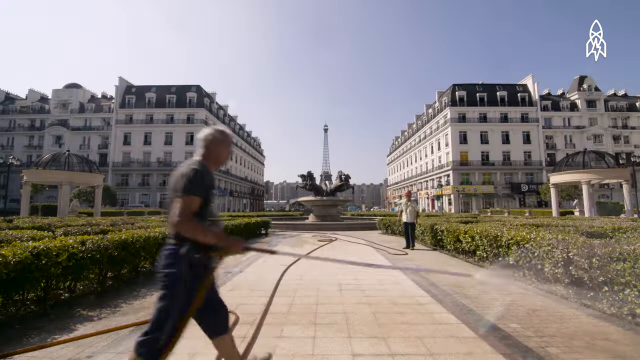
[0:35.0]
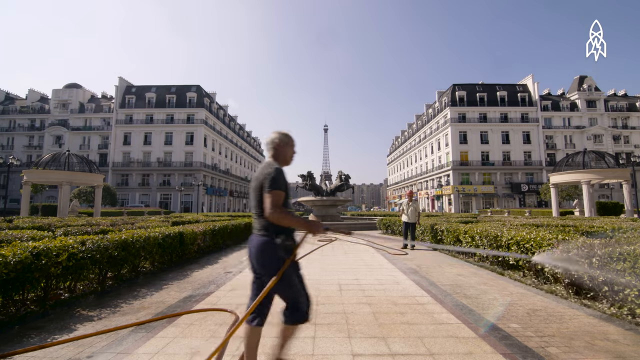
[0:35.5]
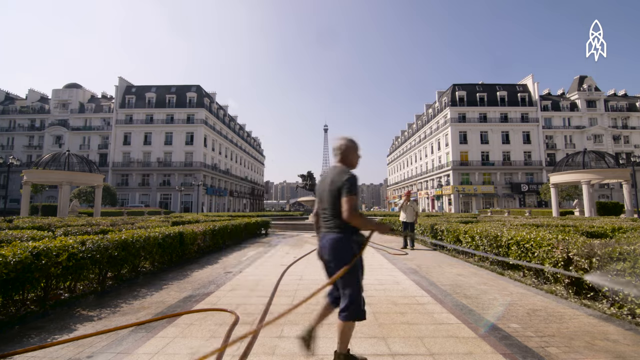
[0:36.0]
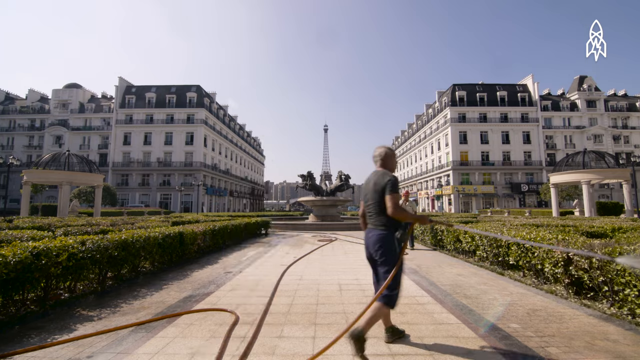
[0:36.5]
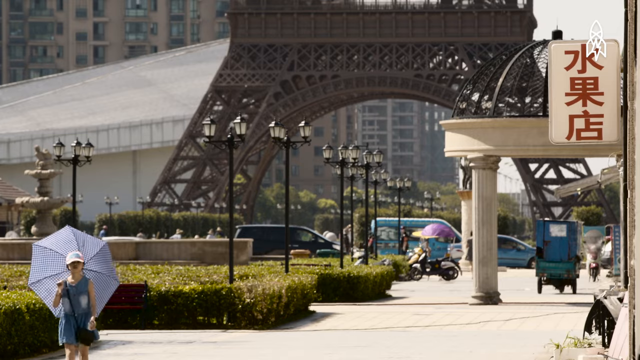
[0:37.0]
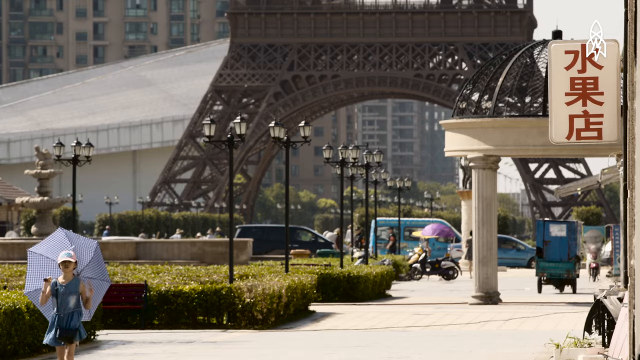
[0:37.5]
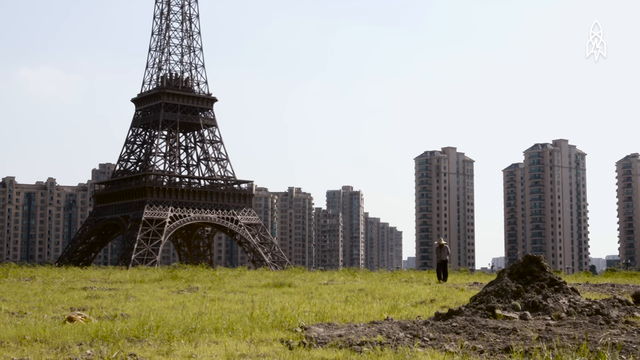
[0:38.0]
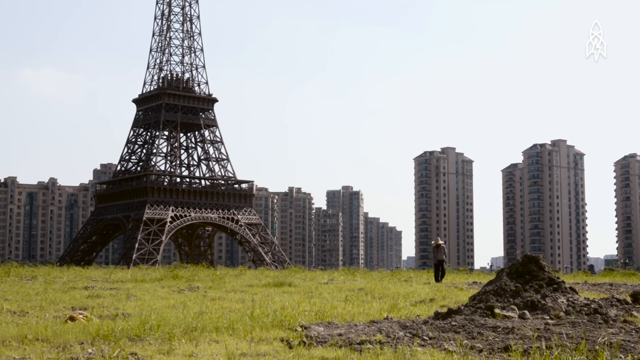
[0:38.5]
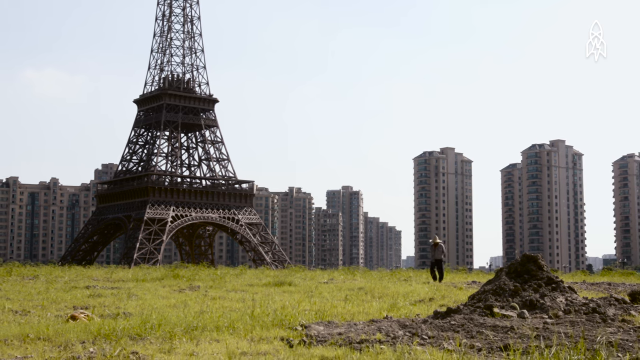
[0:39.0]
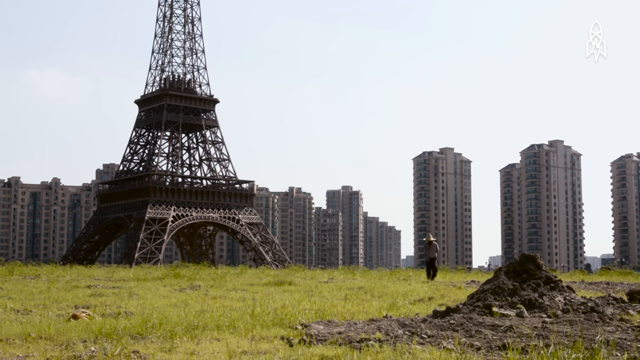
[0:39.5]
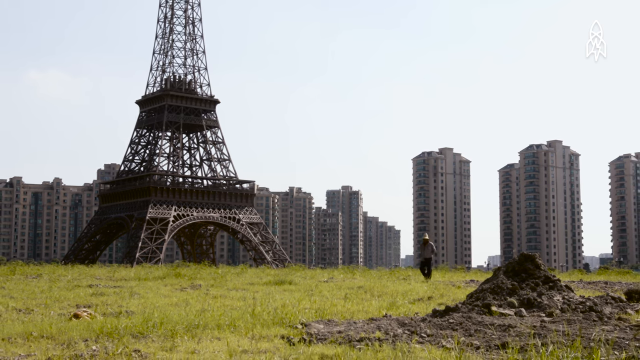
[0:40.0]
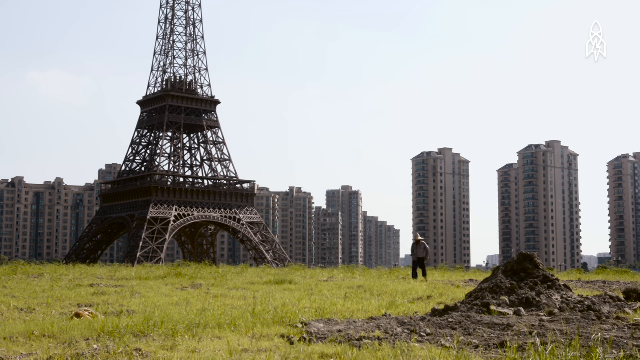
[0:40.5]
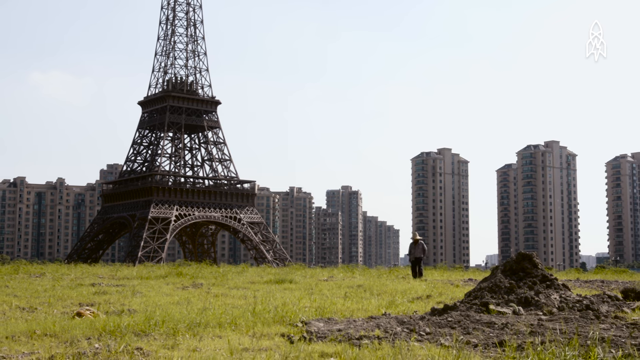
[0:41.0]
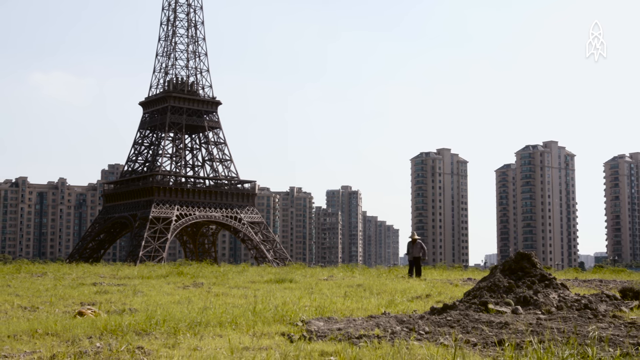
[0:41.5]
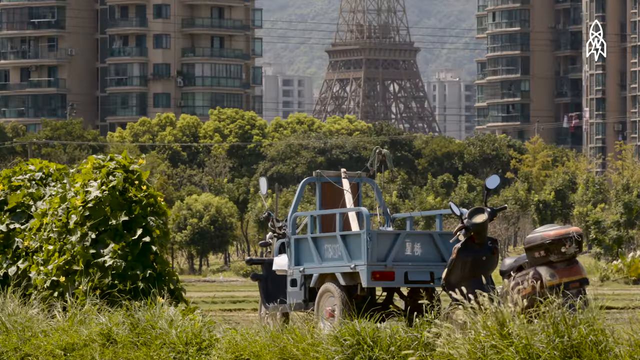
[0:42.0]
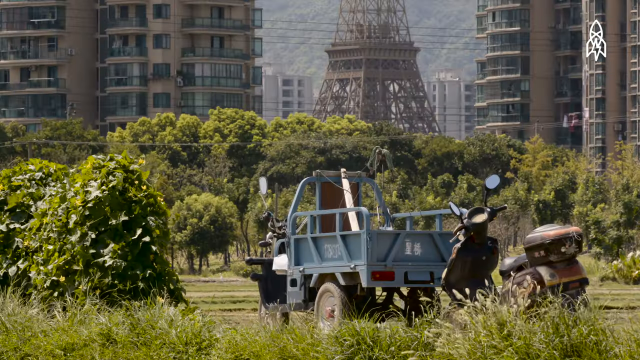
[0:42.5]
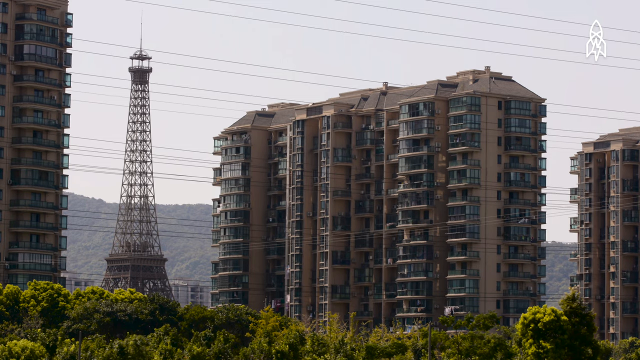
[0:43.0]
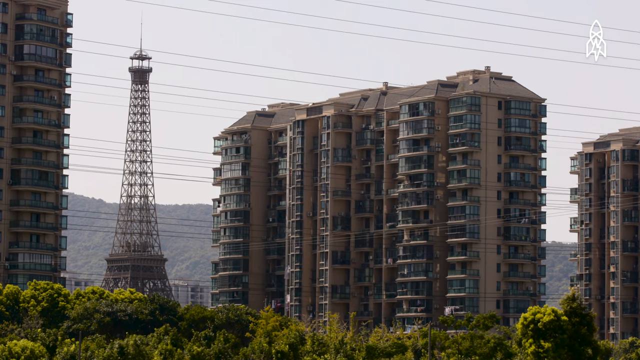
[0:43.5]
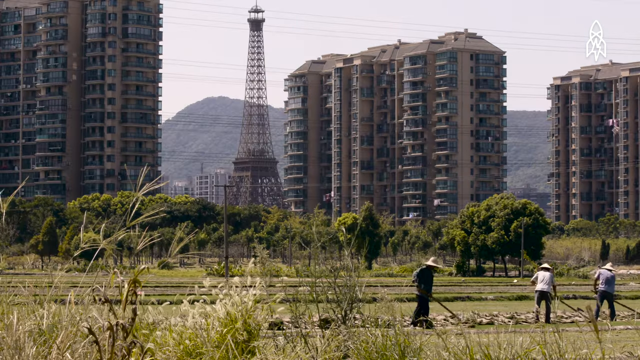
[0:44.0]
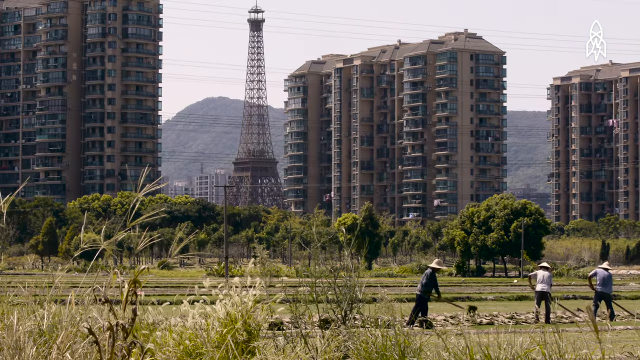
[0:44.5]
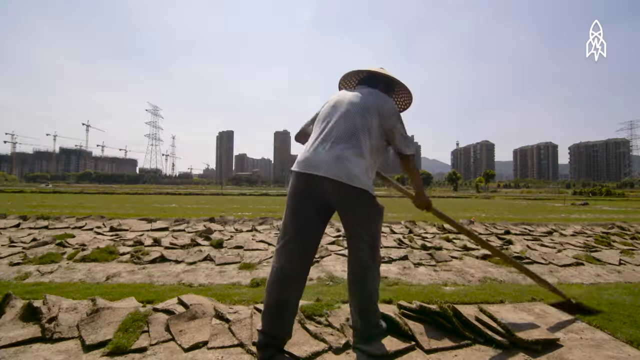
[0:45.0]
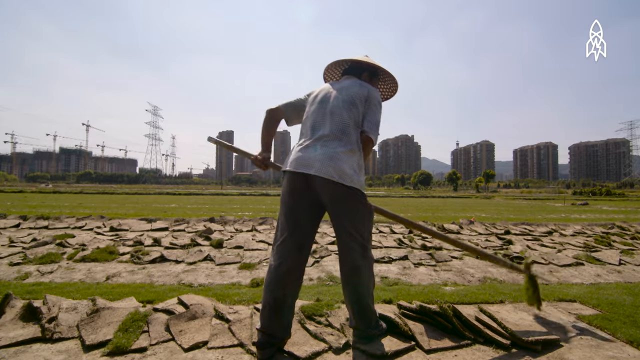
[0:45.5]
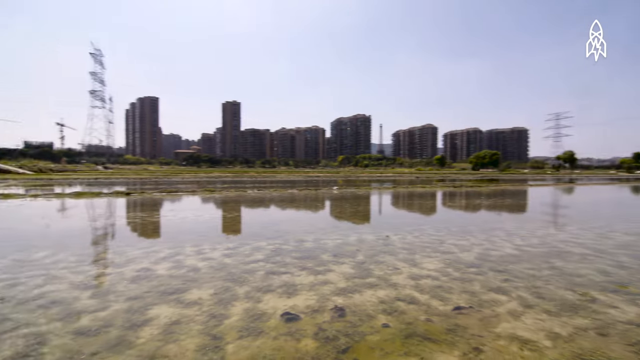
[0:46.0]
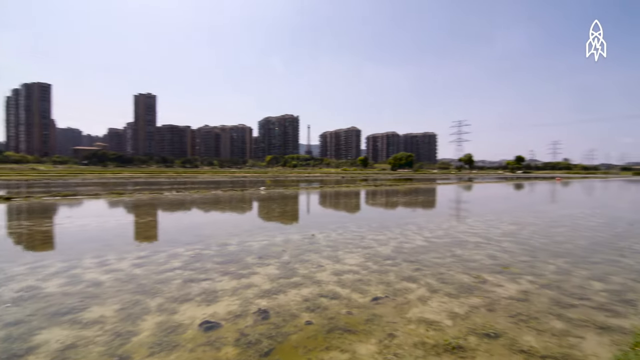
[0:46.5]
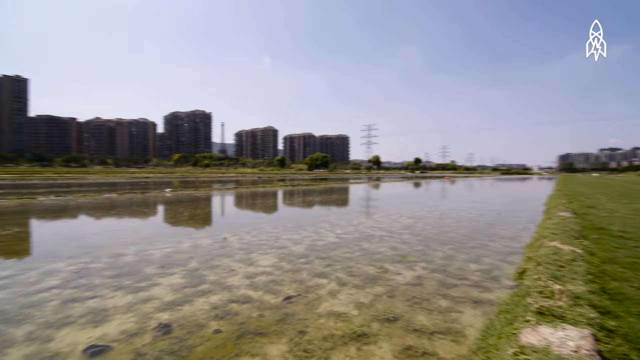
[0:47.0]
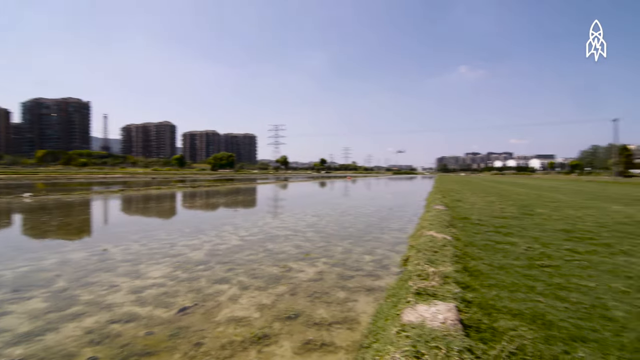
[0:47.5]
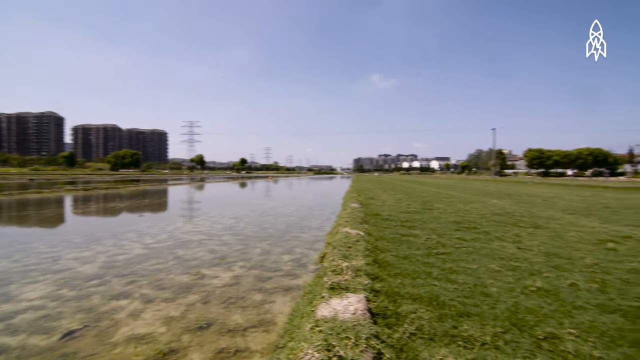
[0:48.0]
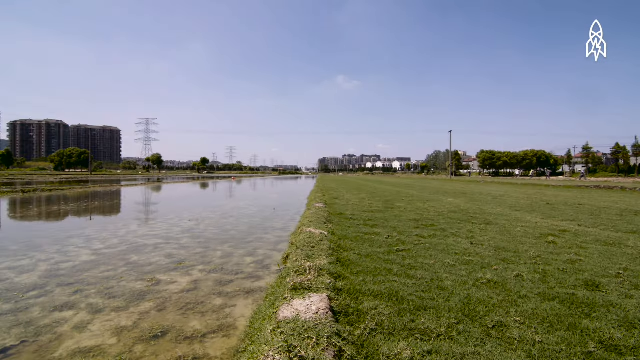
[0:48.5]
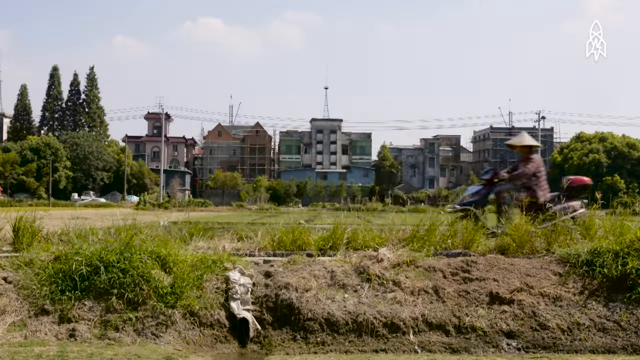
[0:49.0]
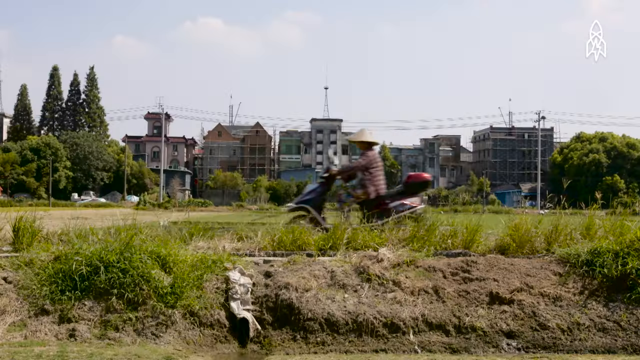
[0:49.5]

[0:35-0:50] Many people around the replica Eiffel Tower tend to gardens, including large shrub gardens, and sidewalks lead up to large recreated fountains that match fountains found around the Eiffel Tower in Paris. Local people move around in what looks like a shopping center area, followed by shots of the buildings around the area. A very clear waterway, seemingly man-made, runs close by. All around there are dozens and dozens of buildings that appear to be apartment buildings rather than business centers. There also appears to be a lot of agriculture around the area.